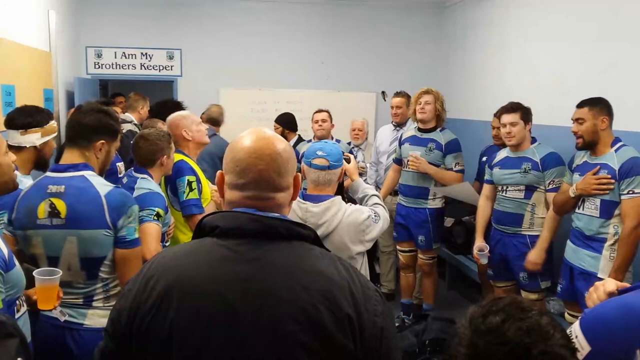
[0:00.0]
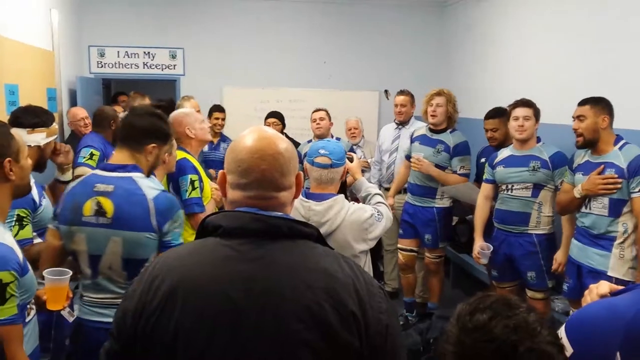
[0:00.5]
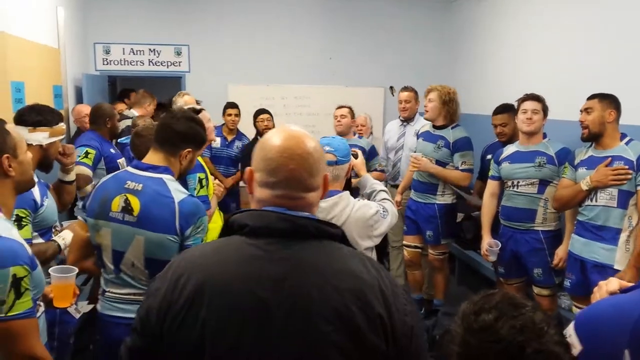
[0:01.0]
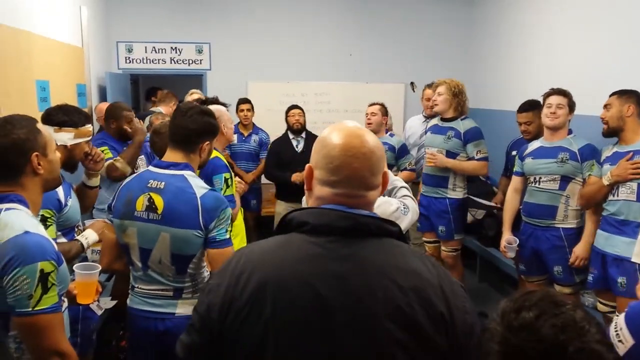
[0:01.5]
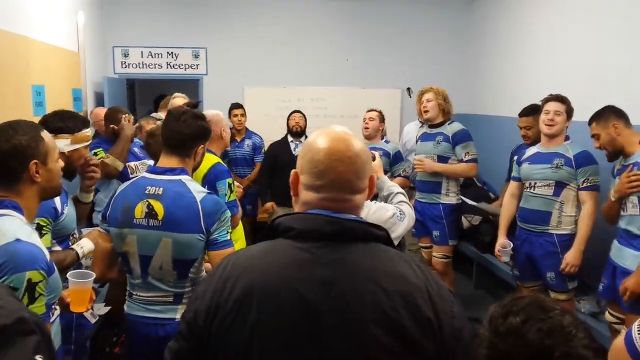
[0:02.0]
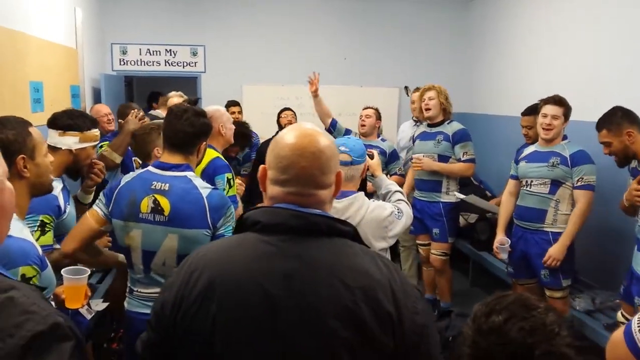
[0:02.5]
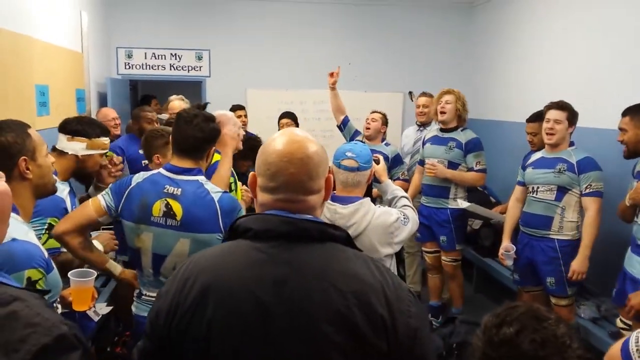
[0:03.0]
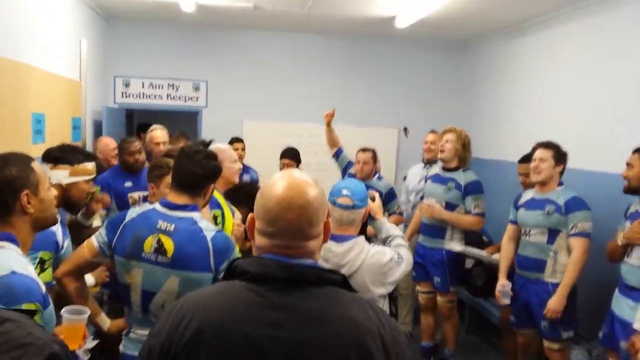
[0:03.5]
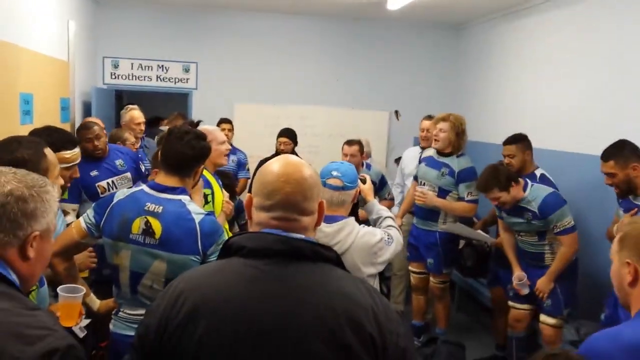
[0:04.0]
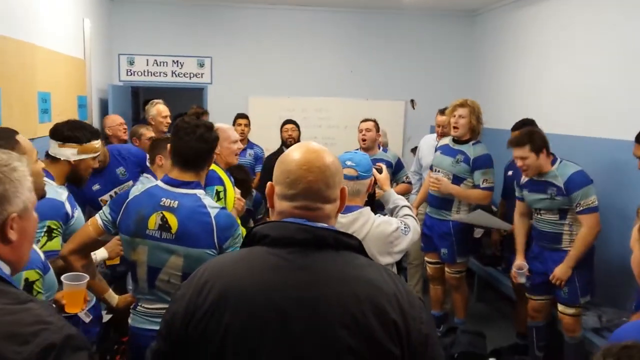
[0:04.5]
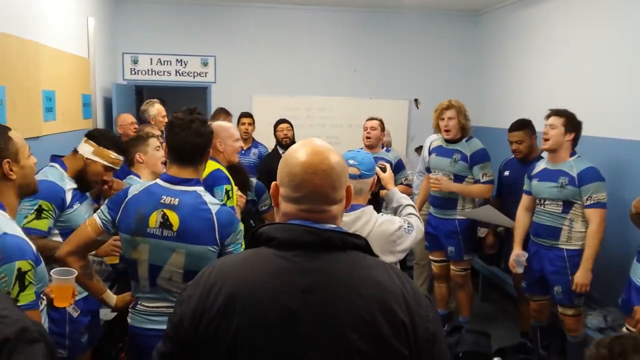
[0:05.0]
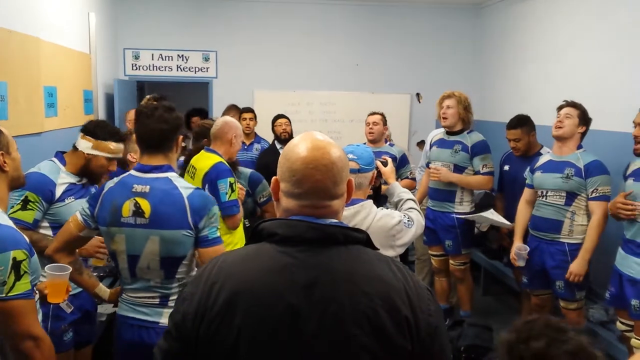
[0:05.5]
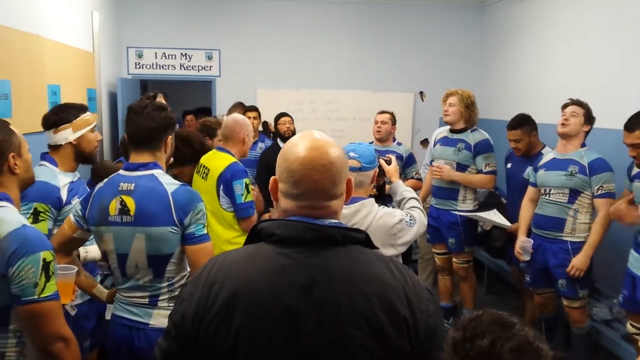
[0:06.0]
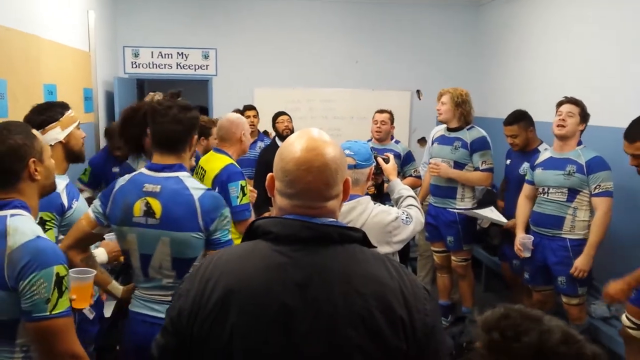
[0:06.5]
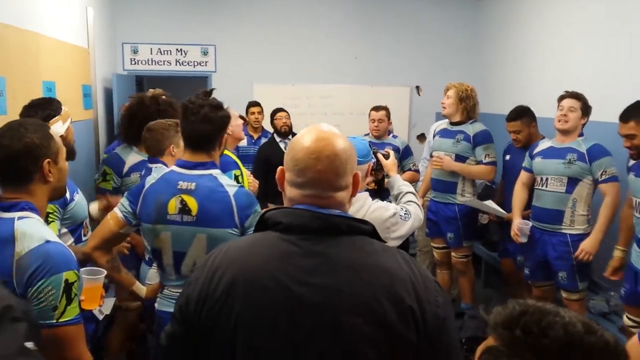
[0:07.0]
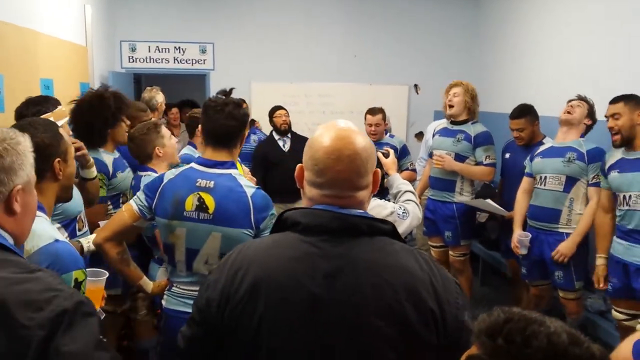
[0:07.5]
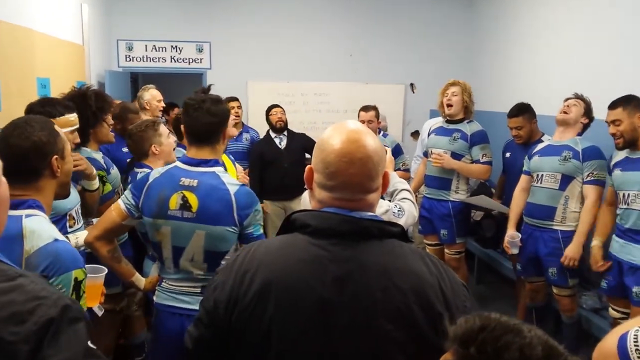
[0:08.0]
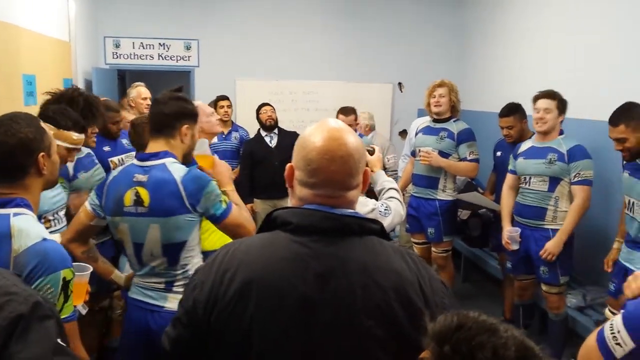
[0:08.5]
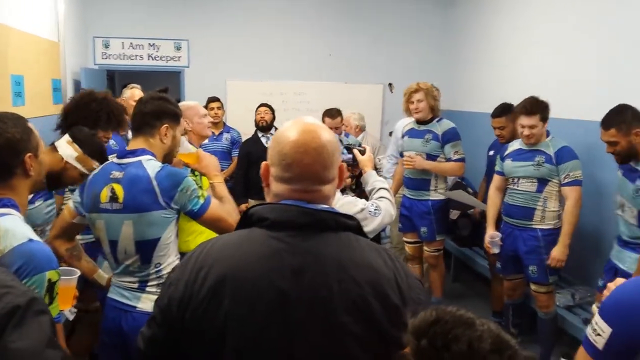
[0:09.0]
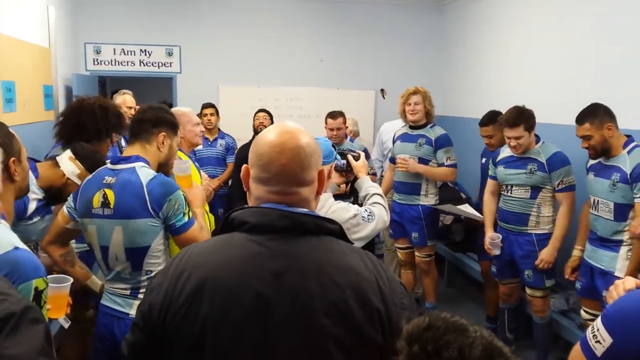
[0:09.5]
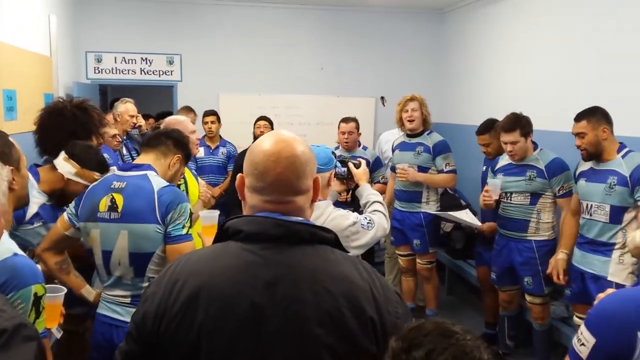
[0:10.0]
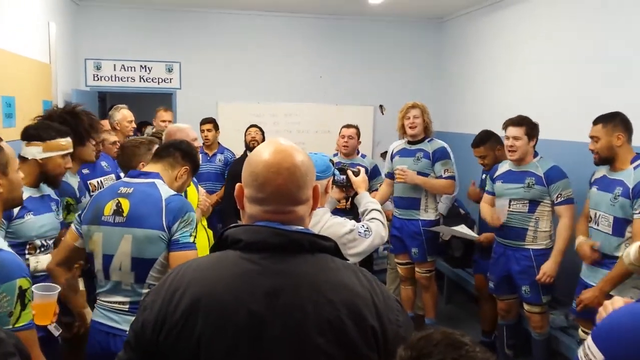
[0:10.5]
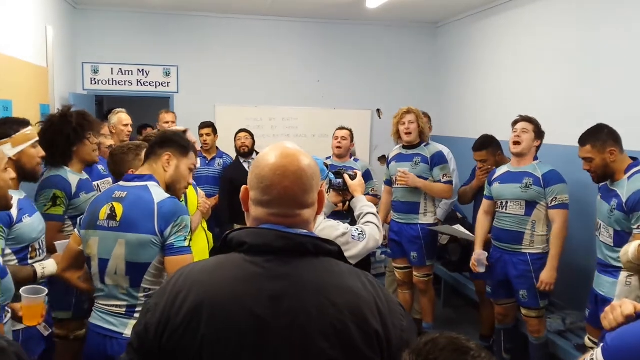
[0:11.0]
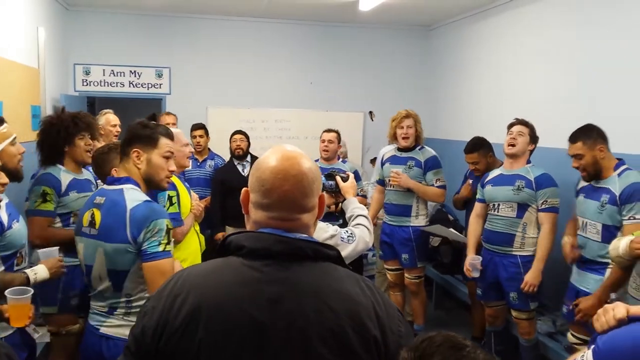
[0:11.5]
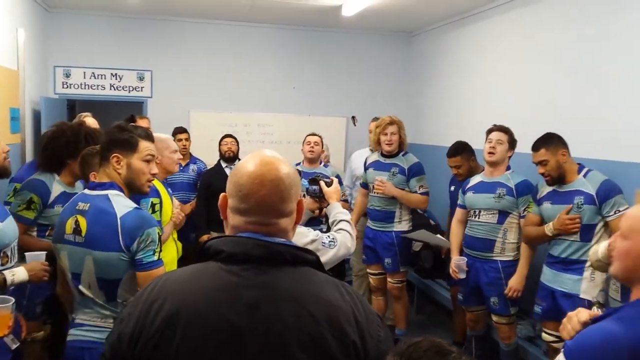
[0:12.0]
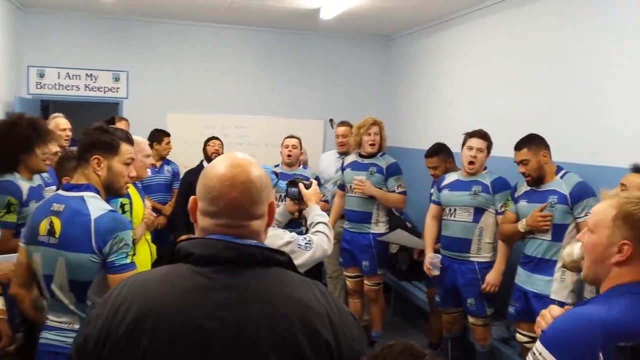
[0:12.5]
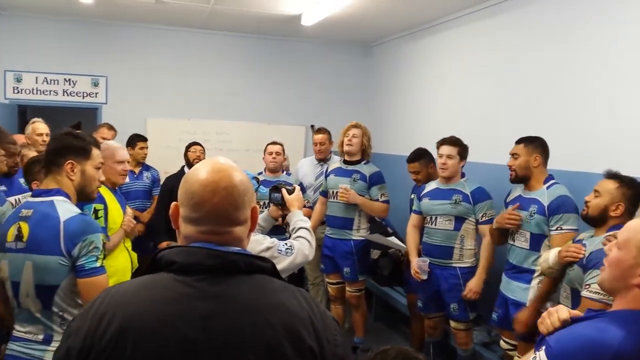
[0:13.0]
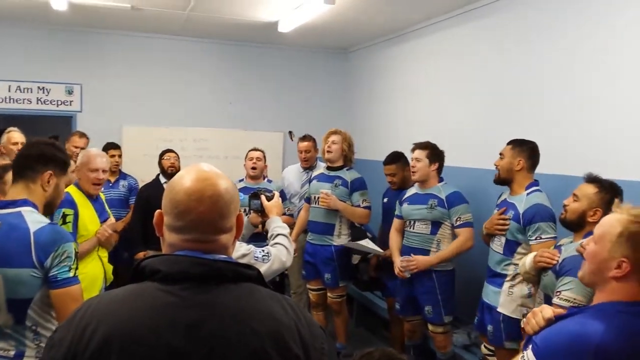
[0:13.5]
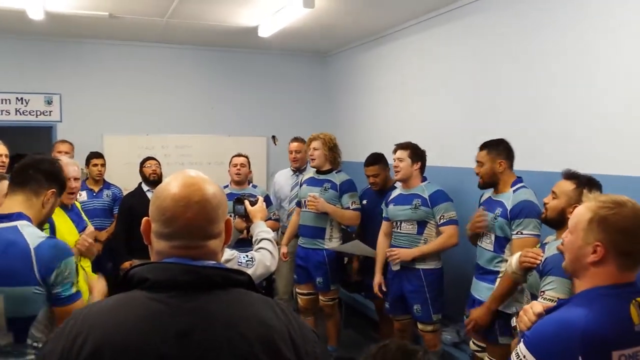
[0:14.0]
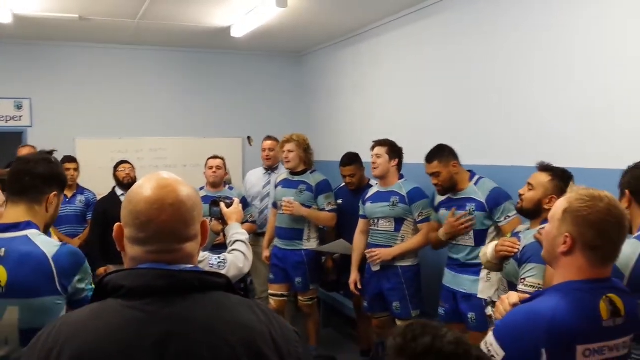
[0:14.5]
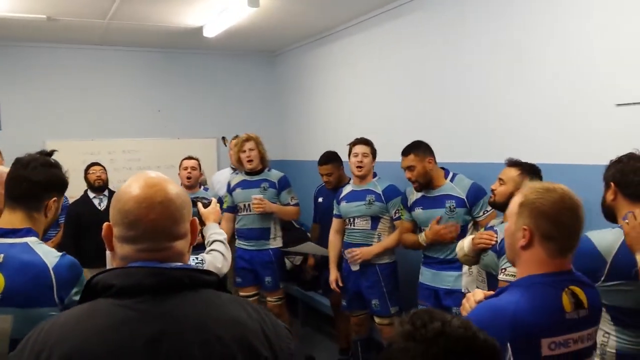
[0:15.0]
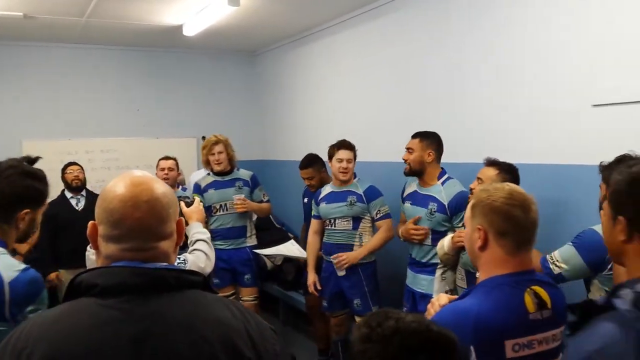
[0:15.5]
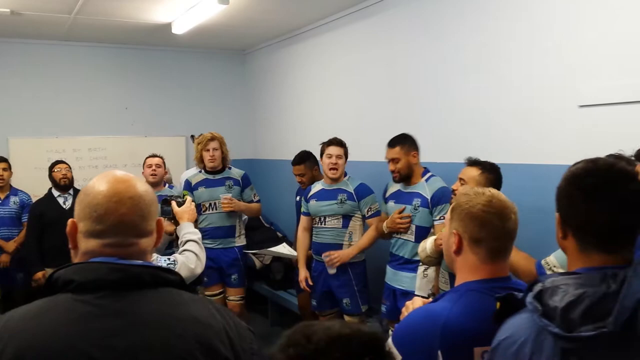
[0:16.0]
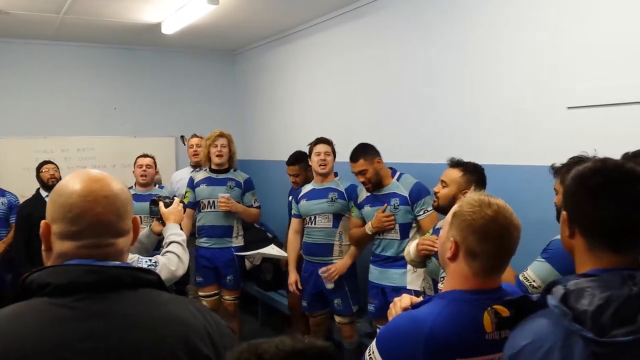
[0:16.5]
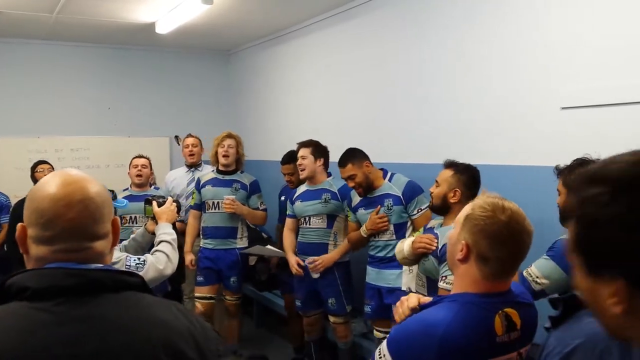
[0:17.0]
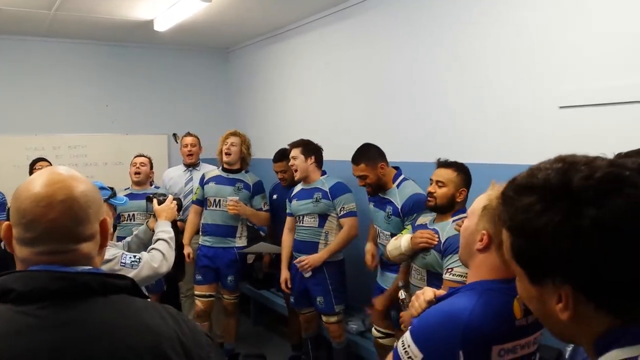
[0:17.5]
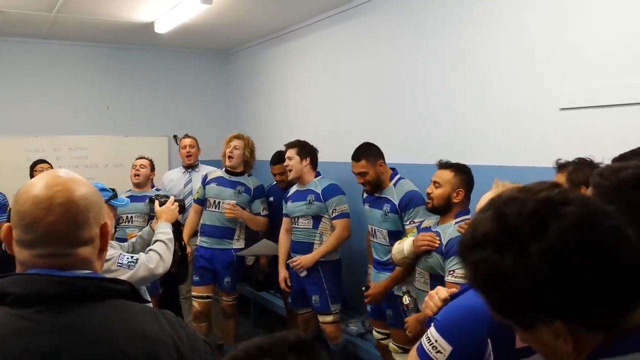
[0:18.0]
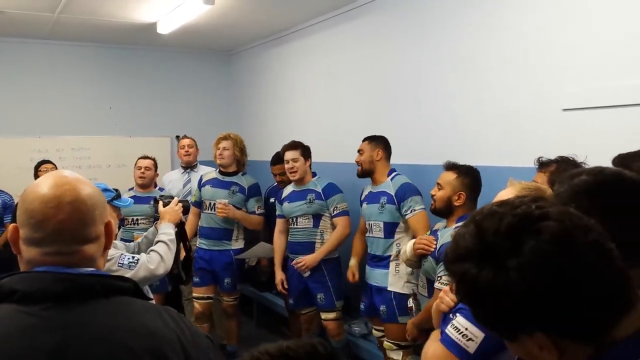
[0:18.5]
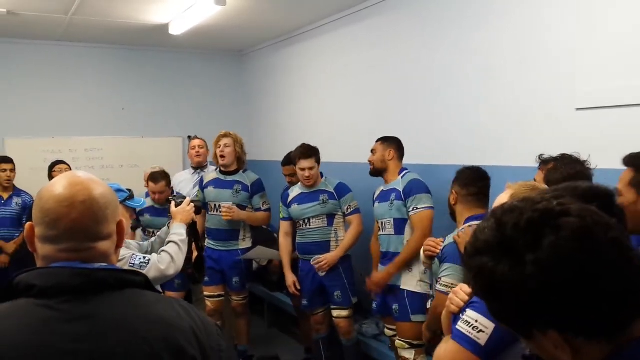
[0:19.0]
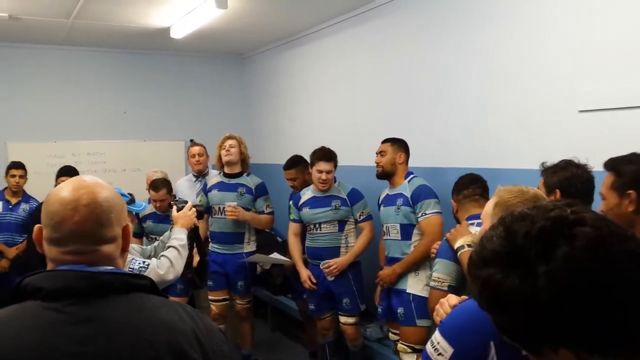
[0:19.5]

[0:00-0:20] What looks like a rugby team meeting takes place in a very small room, with what seems to be about 12 people in view, apparently a mix of players, coaching staff and security personnel. The players wear uniforms with blue and light blue stripes and blue shorts. A logo in the back is hard to make out but looks like a howling wolf with a rising moon behind it. A sign over the door says "I am my brother's keeper." Another person, in a blue hat or baseball cap, is taking video of the meeting. The rugby players are singing or chanting something, and it looks like a sports get-together before a game, as if they are getting themselves psyched up. The players are all heavy and muscular.